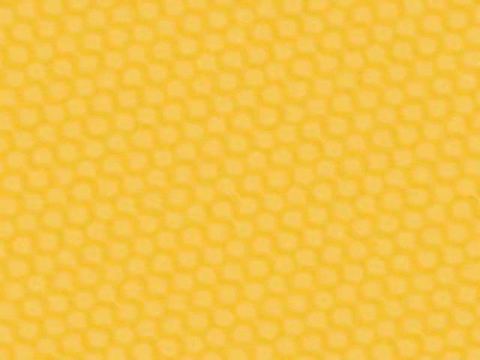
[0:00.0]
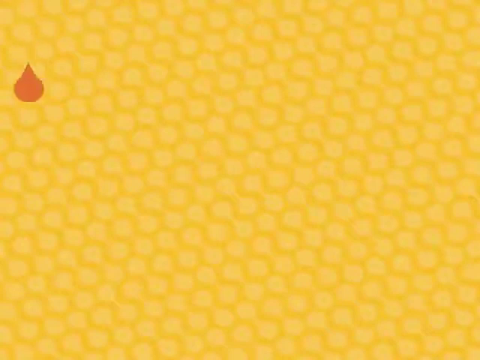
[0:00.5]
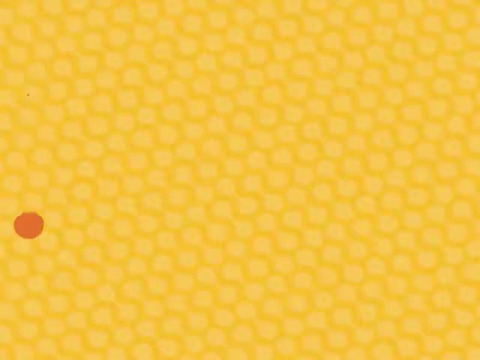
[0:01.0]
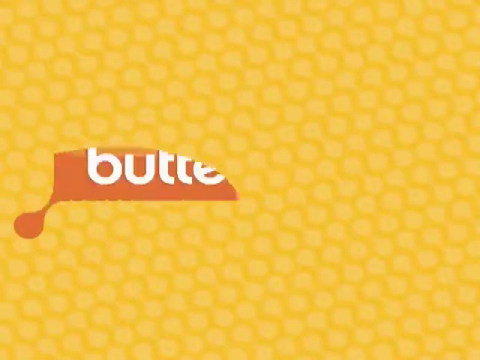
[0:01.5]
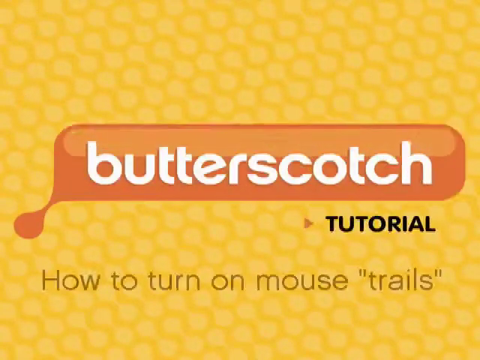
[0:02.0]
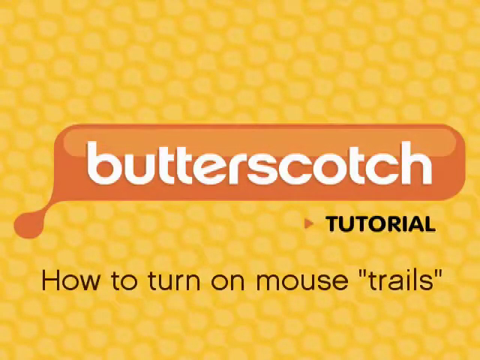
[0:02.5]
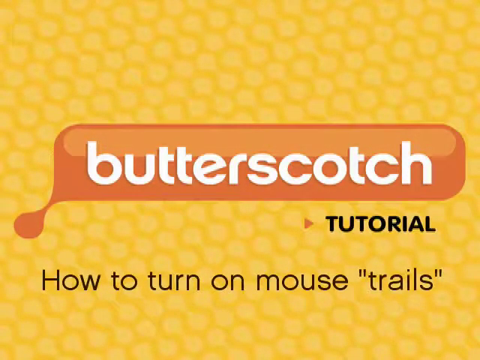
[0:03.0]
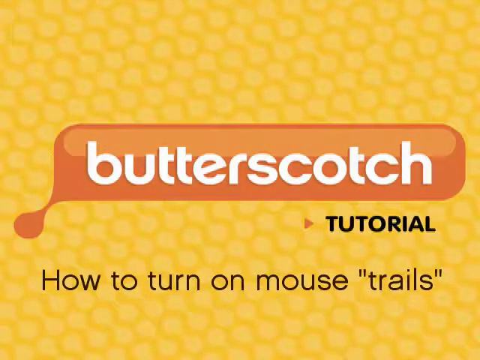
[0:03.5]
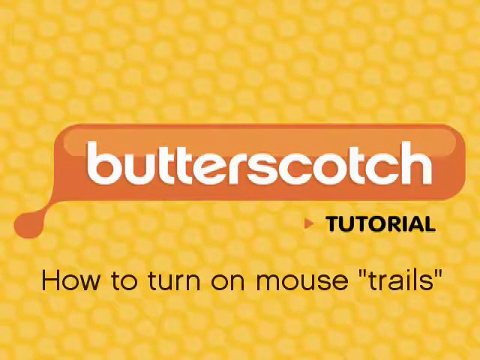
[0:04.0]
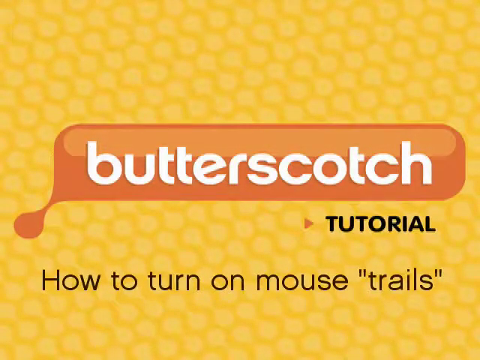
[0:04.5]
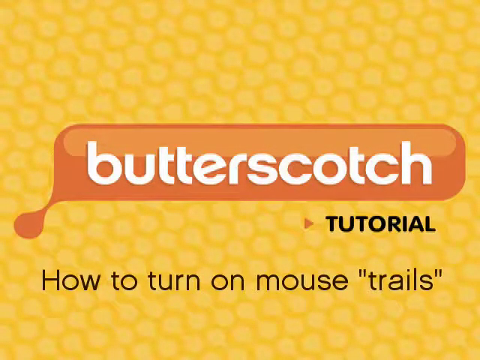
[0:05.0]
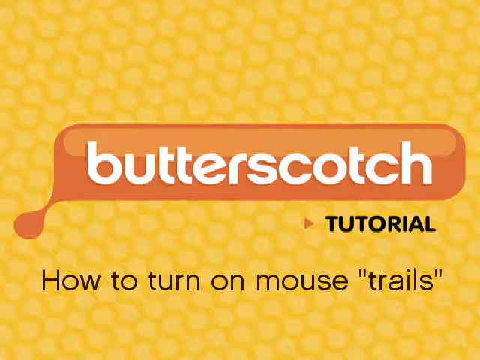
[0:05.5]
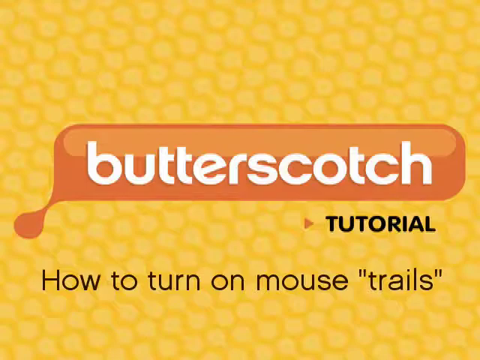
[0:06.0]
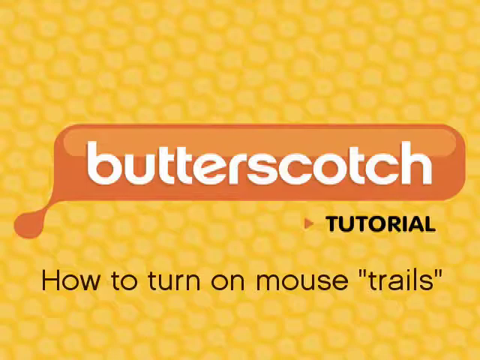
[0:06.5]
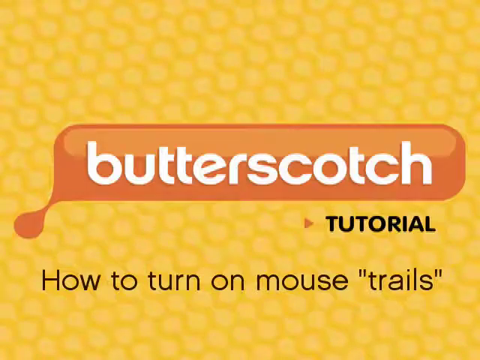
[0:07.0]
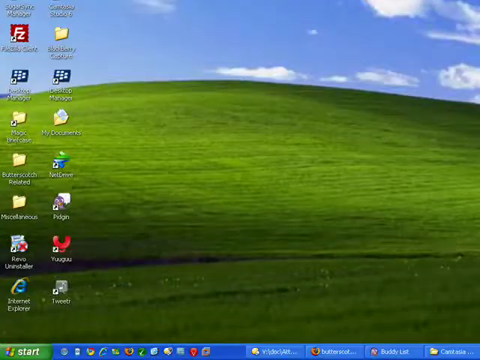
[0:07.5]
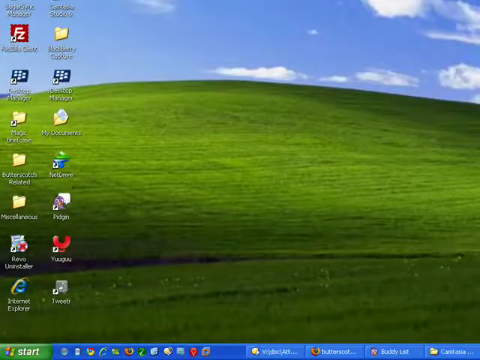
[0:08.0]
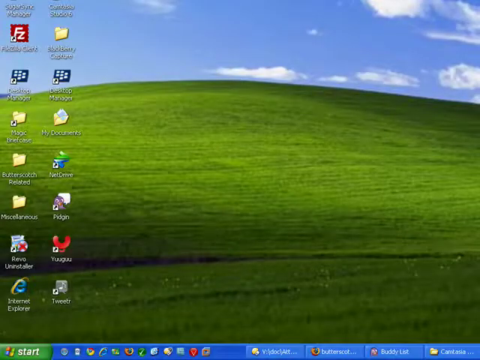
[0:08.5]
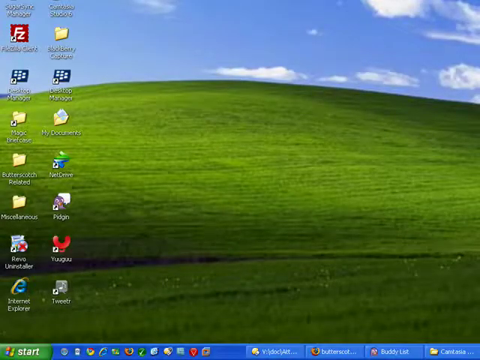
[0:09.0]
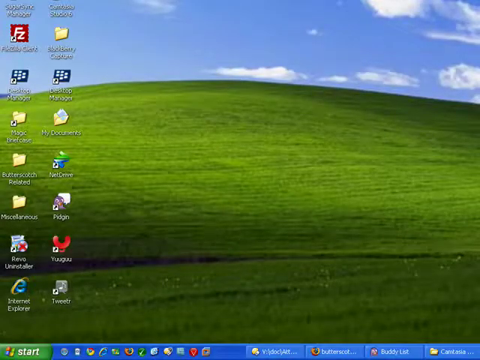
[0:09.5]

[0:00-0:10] The video opens on a yellow honeycomb pattern, with the honeycomb in a slightly darker yellow. An orange drop falls on the left side, stops, and unrolls into an orange shape. It reads "butterscotch" in white letters, and "tutorial" appears in black letters with a butterscotch-colored arrow pointing toward it. Next, text reads "how to turn on mouse "trails"" in black lettering on the honeycomb background. The video then cuts to what looks like a Windows Vista screen with a number of icons.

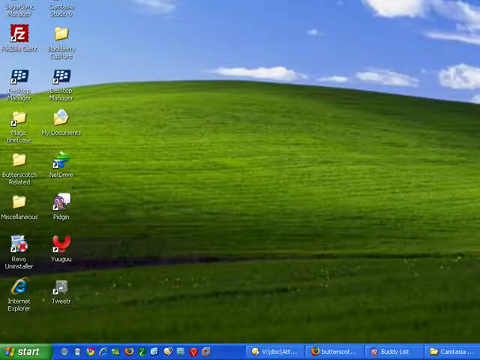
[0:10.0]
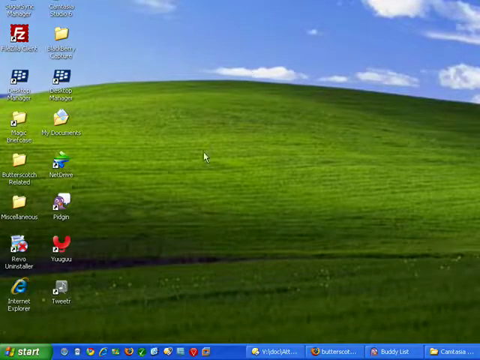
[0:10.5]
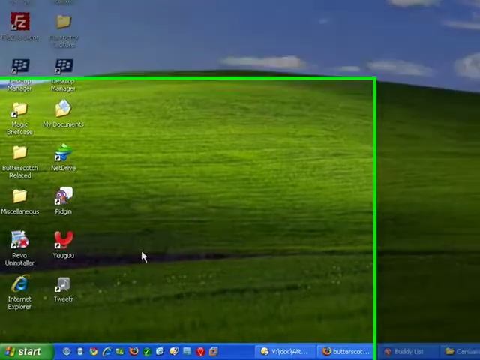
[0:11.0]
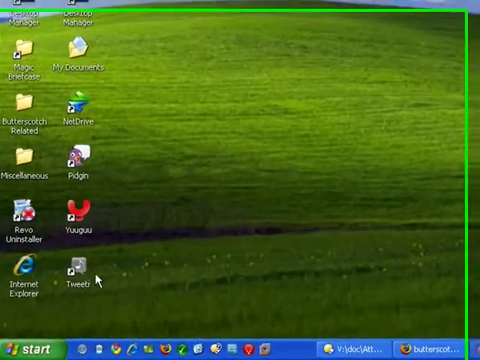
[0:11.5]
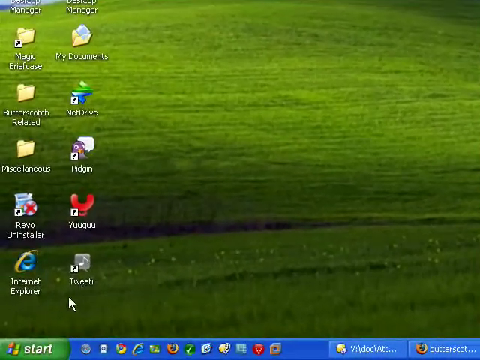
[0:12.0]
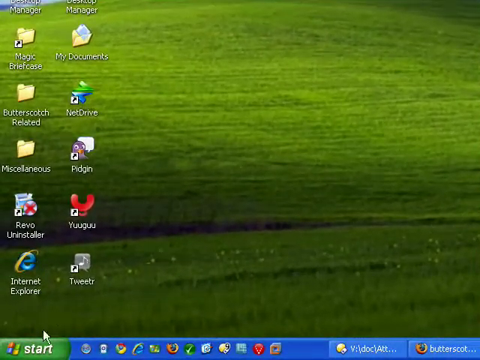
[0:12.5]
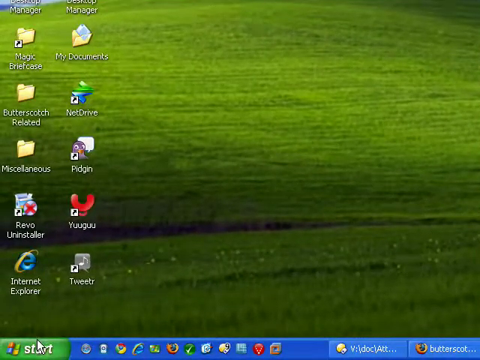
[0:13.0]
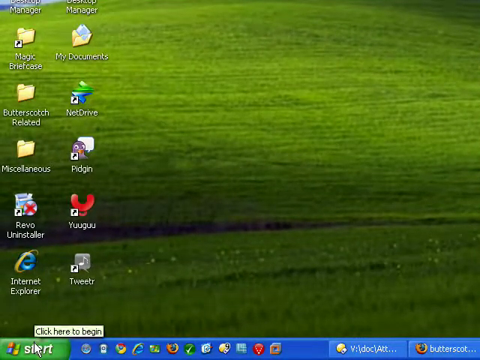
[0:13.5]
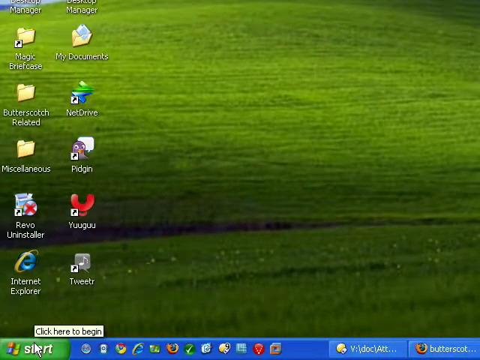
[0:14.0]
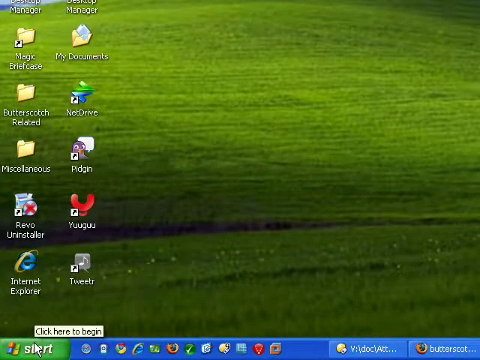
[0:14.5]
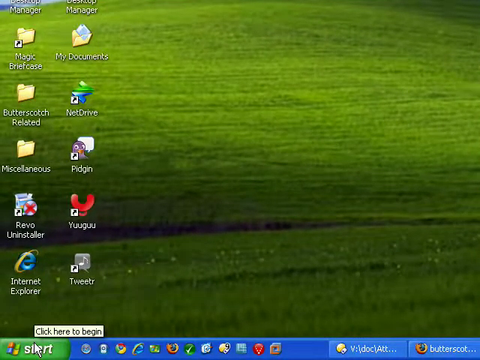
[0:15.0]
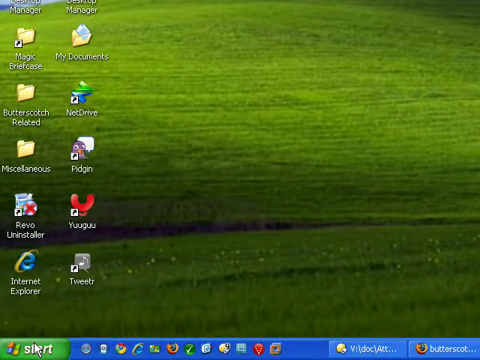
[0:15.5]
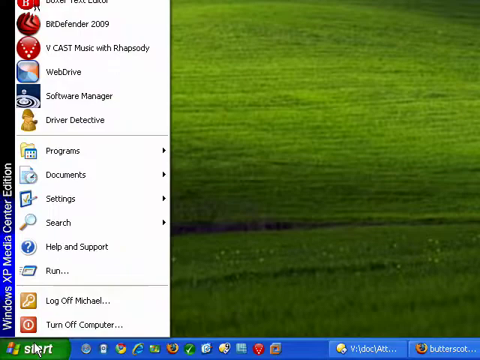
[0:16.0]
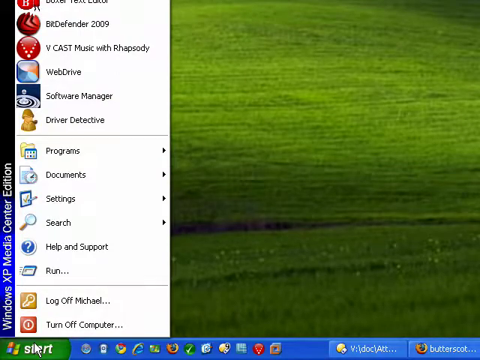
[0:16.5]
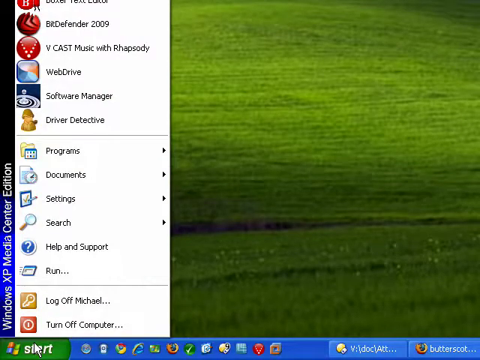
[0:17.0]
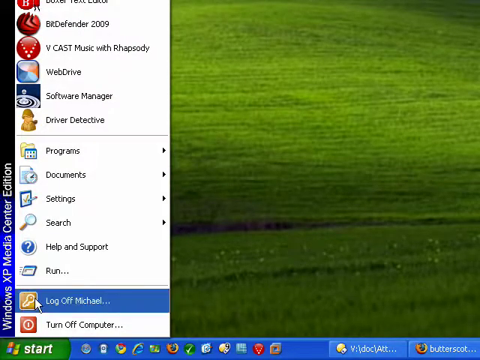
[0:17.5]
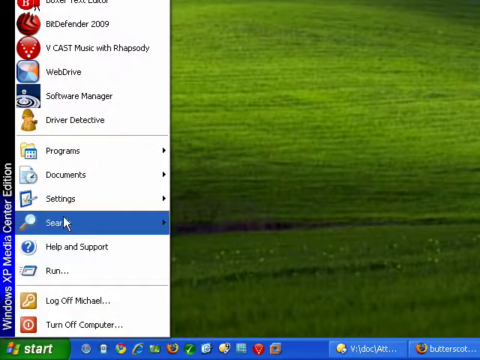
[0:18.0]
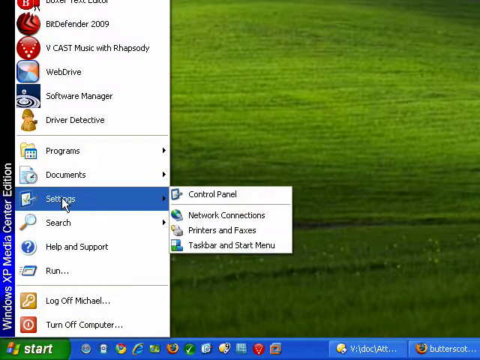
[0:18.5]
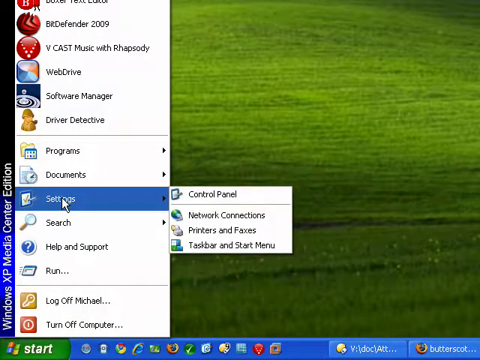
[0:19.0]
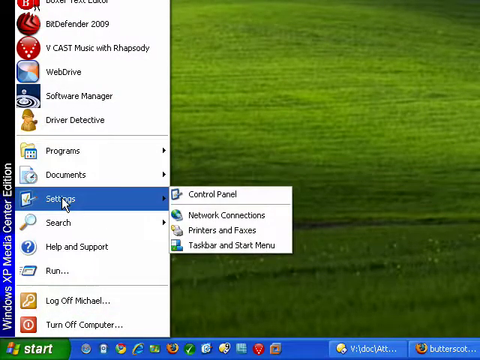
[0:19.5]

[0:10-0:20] The Windows screen appears, then the whole desktop shrinks and reveals a black and white desktop behind it, which very quickly grows back to cover it. The regular Windows desktop returns, and a pull-down brings up a pop-up in which settings is chosen. It looks like the control panel is starting to be set; the pop-up looks like the control panel.